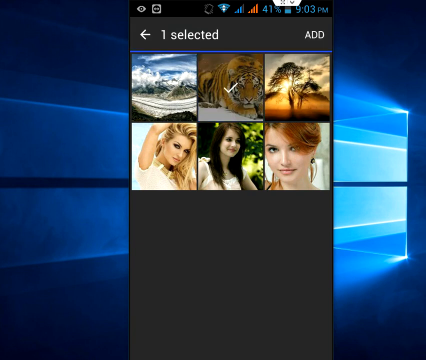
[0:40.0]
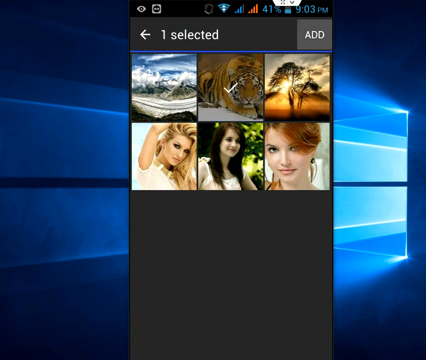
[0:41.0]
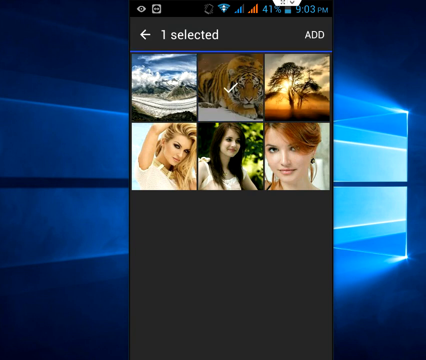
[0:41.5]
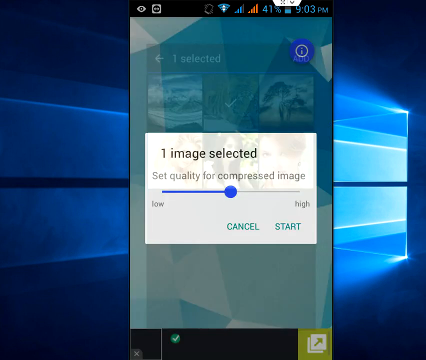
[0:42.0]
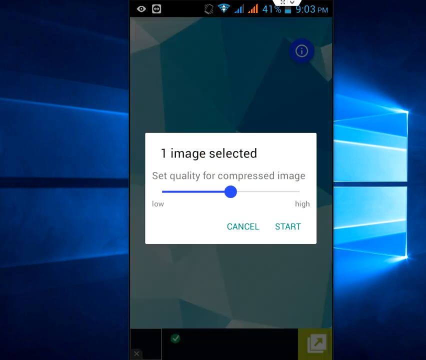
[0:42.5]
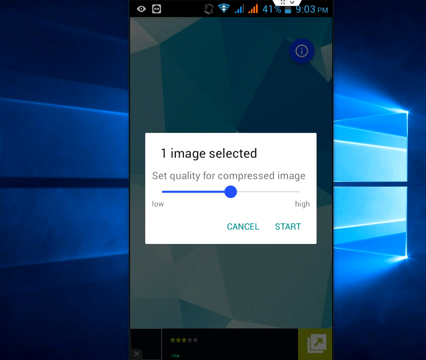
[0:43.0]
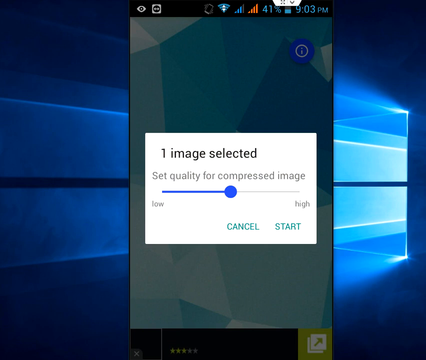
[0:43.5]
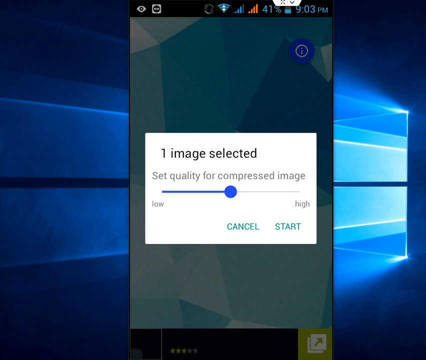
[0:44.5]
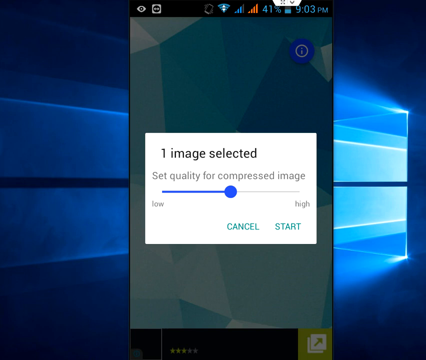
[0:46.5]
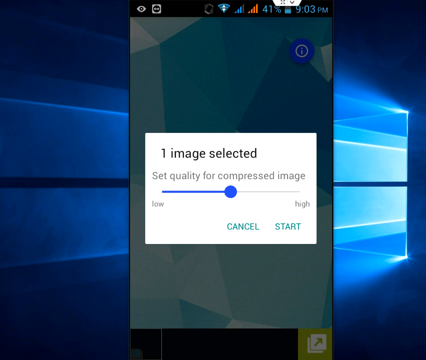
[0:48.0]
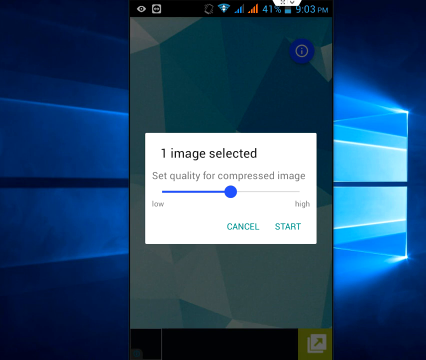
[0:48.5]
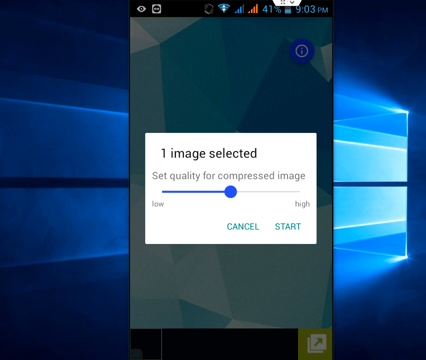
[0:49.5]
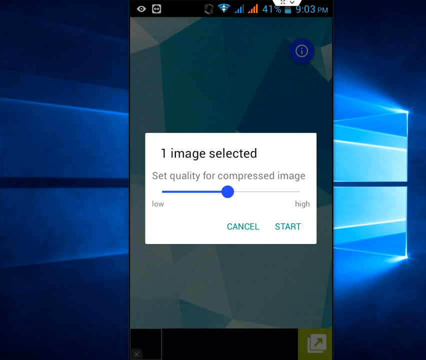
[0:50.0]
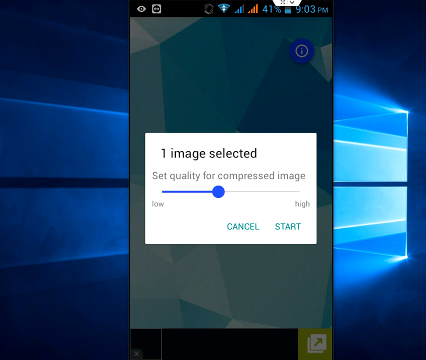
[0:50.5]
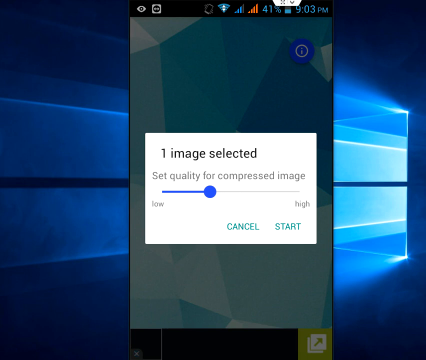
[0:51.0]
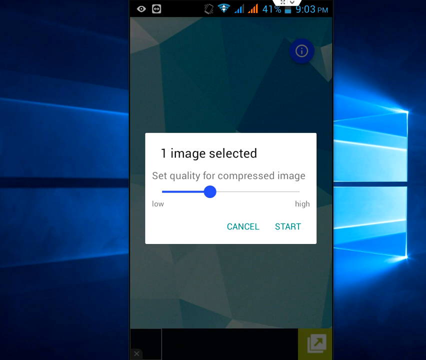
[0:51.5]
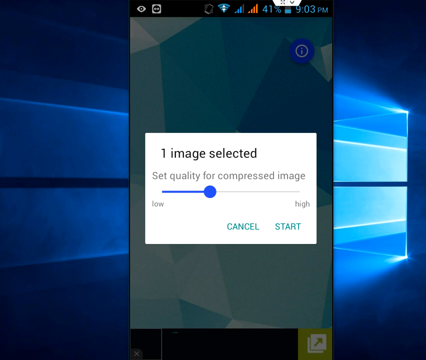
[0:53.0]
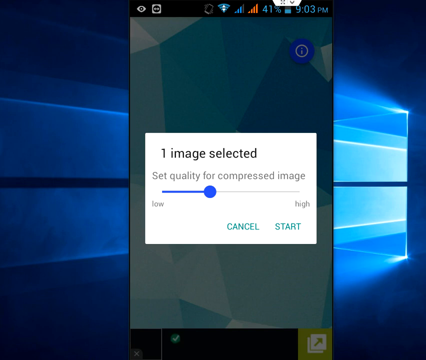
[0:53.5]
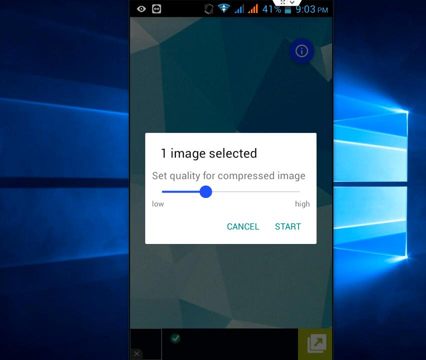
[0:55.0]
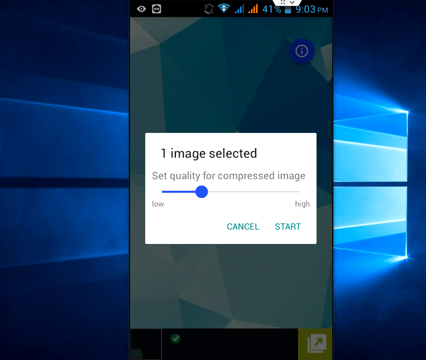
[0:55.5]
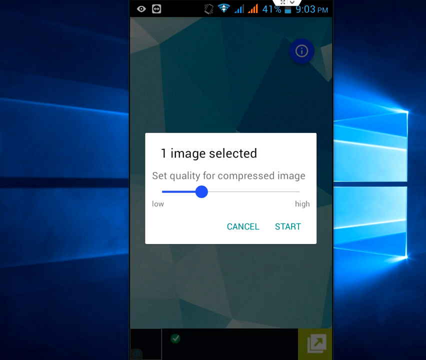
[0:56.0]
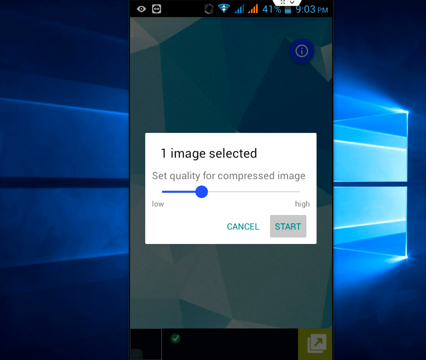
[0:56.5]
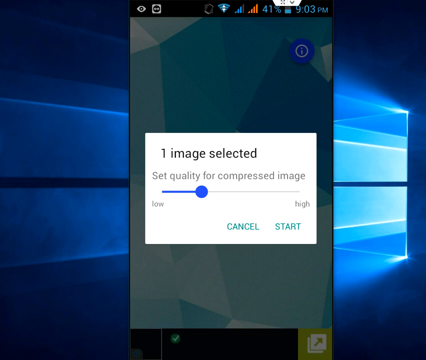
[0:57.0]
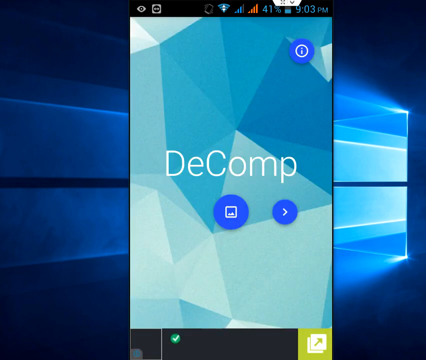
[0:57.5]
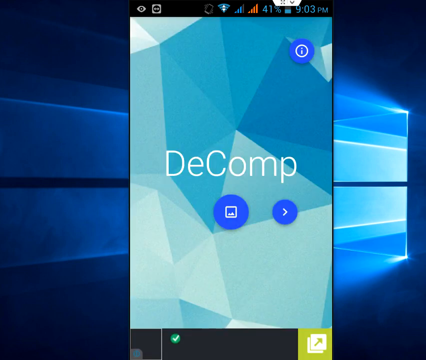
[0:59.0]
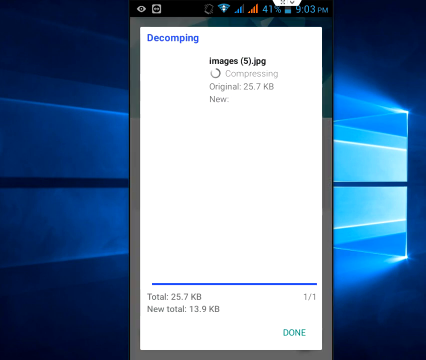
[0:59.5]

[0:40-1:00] The user selects images, deselects one and selects it again, then clicks add, so one image is selected. A quality setting for the compressed image ranges from low to high and is set in the middle; the user moves it to low and clicks start. The screen returns to Decomp's home page, where it says "Decomping" and shows loading. The battery is at 41%, and the interface still looks old-style.